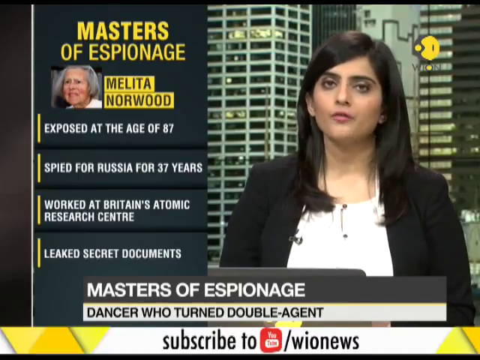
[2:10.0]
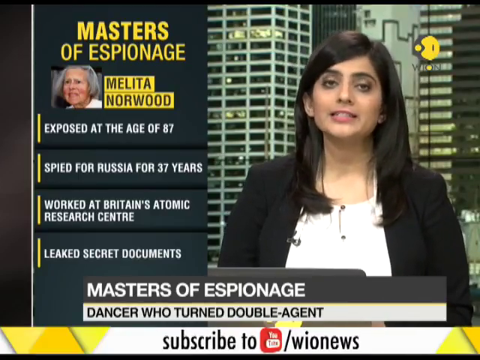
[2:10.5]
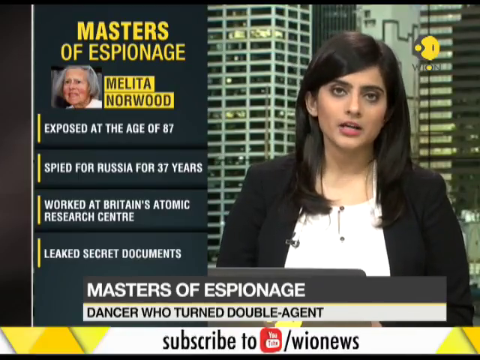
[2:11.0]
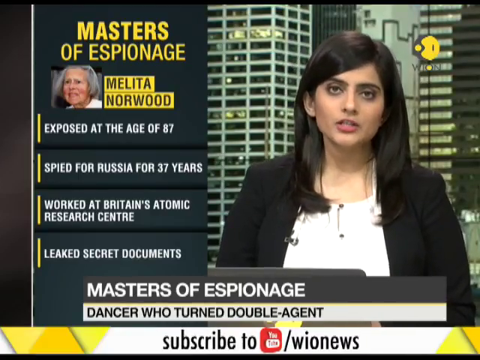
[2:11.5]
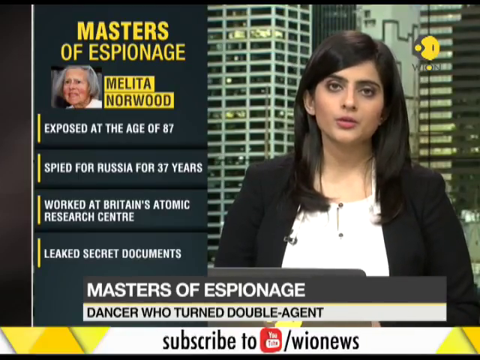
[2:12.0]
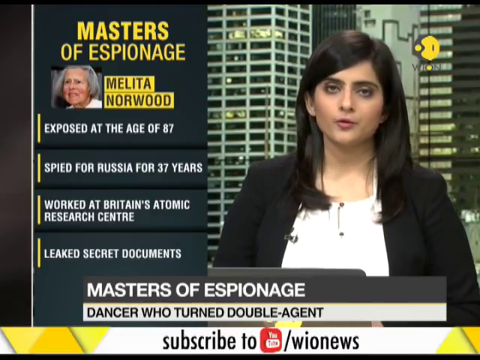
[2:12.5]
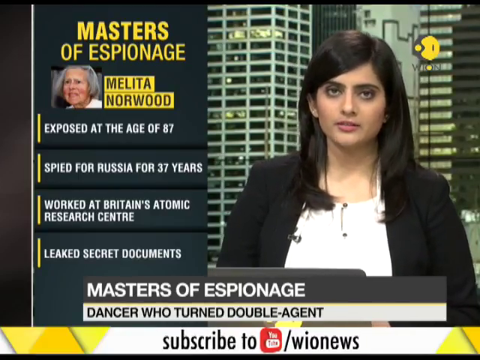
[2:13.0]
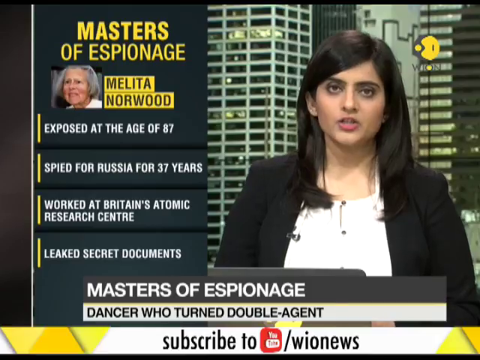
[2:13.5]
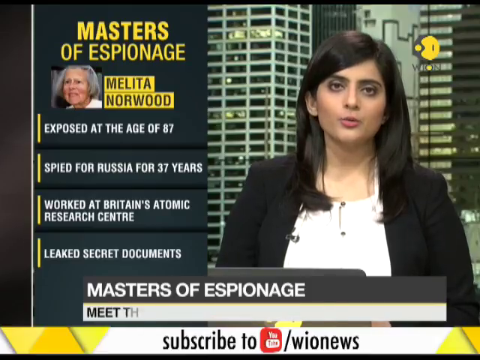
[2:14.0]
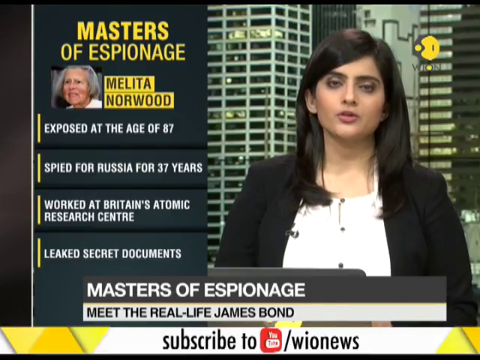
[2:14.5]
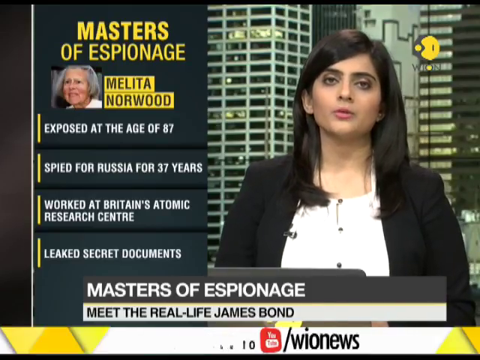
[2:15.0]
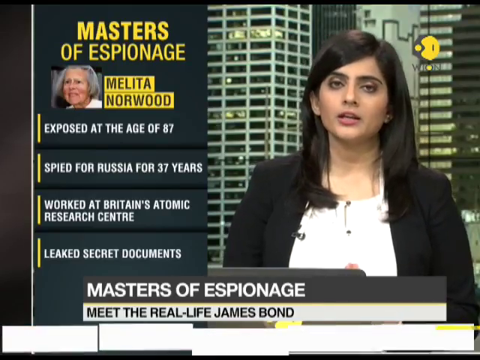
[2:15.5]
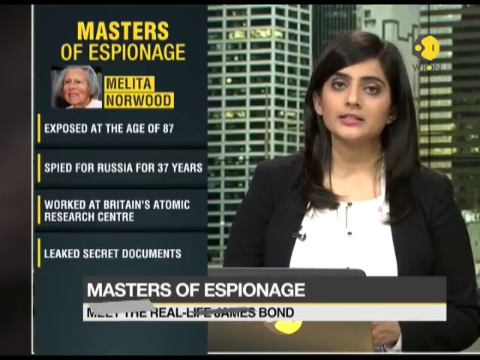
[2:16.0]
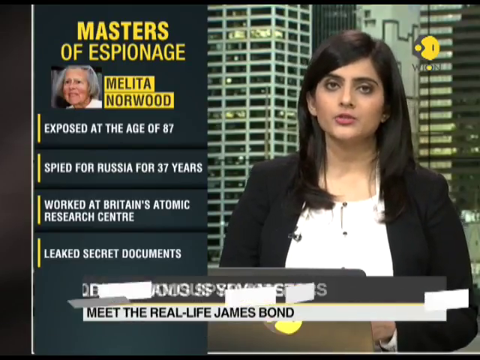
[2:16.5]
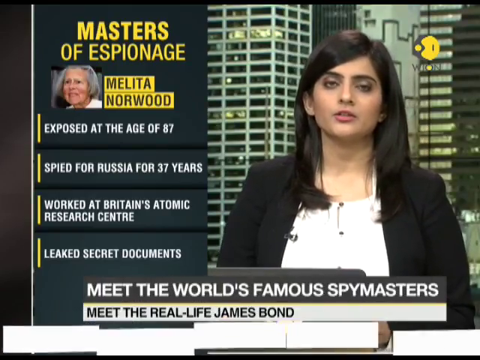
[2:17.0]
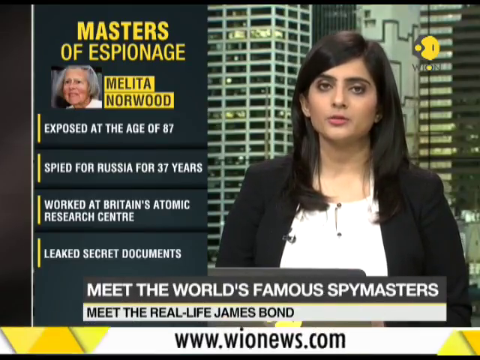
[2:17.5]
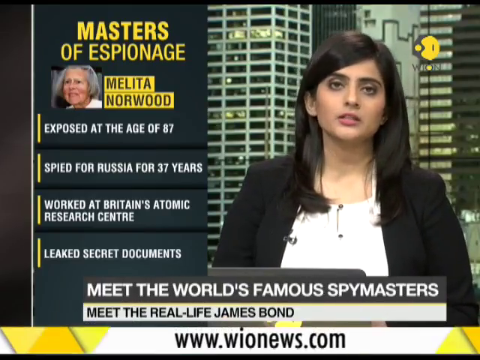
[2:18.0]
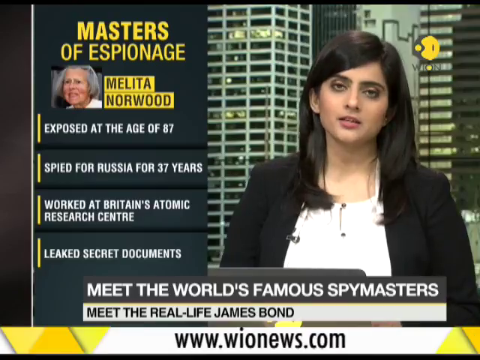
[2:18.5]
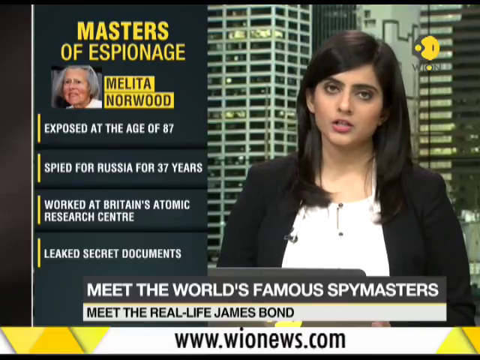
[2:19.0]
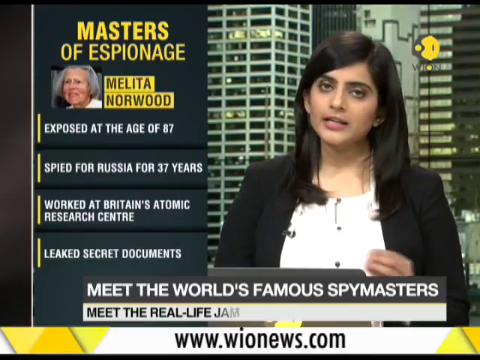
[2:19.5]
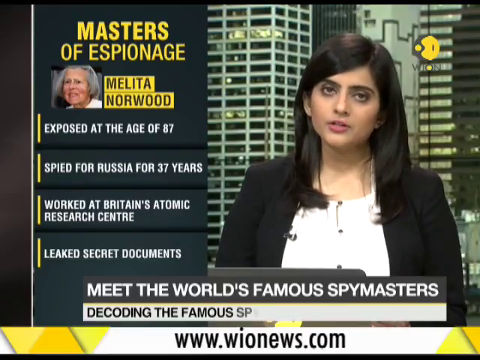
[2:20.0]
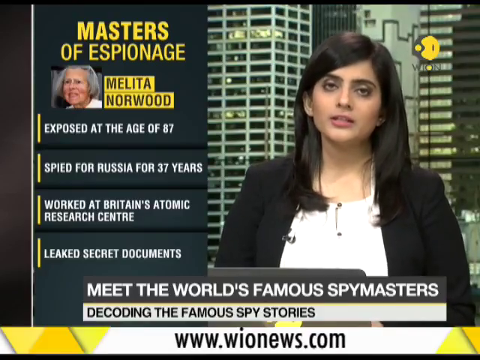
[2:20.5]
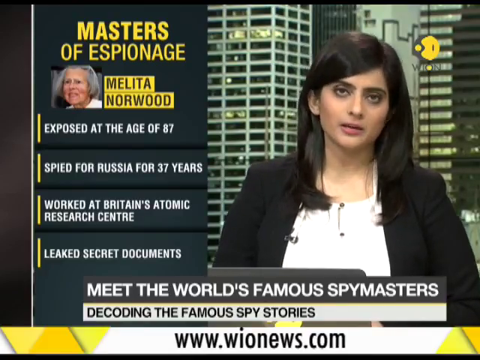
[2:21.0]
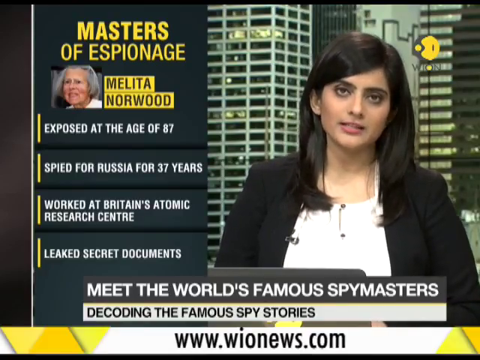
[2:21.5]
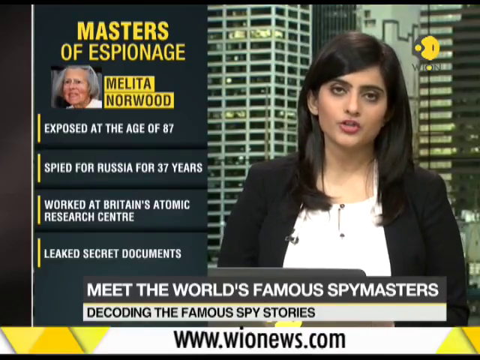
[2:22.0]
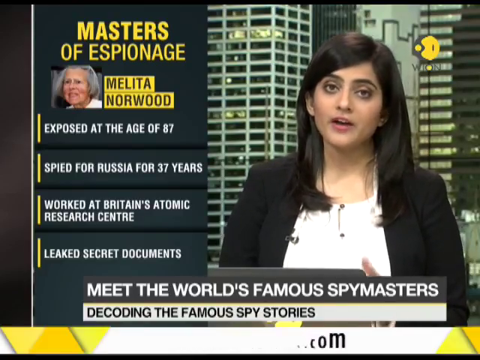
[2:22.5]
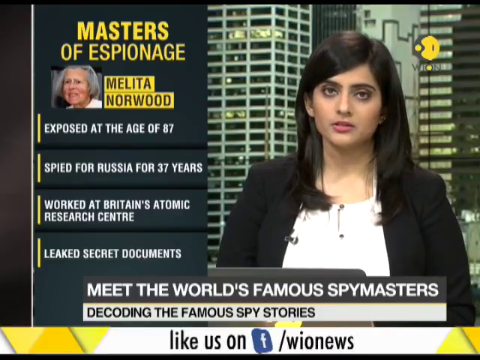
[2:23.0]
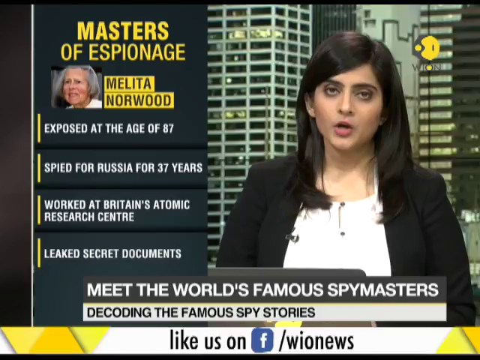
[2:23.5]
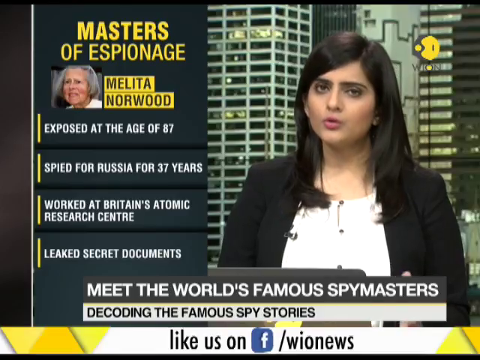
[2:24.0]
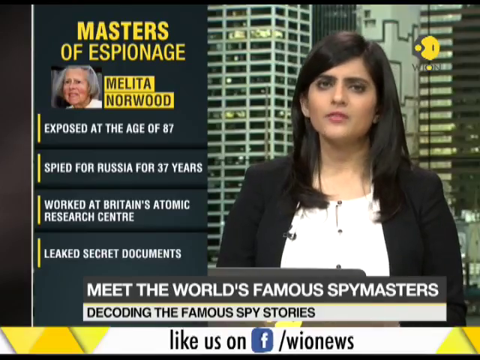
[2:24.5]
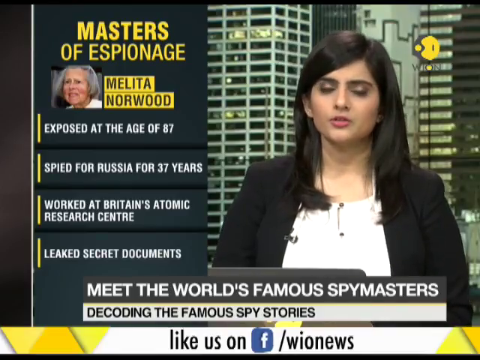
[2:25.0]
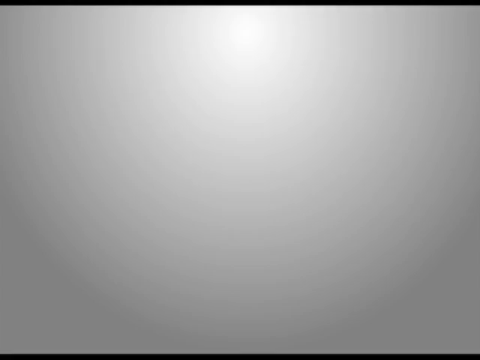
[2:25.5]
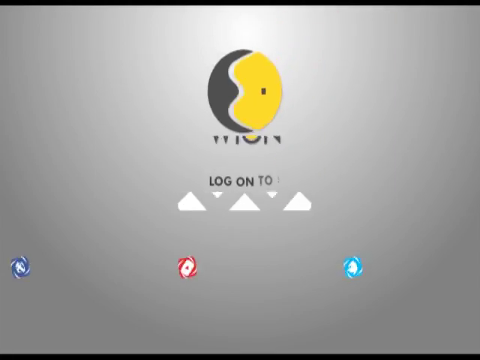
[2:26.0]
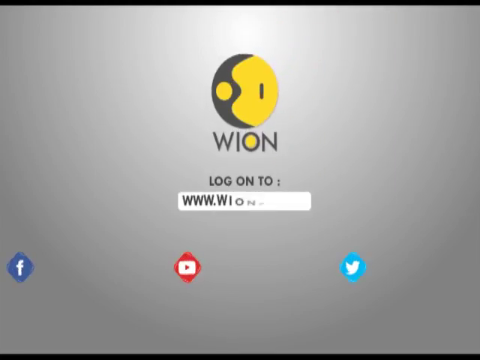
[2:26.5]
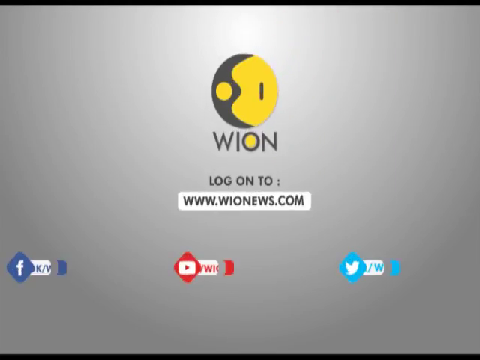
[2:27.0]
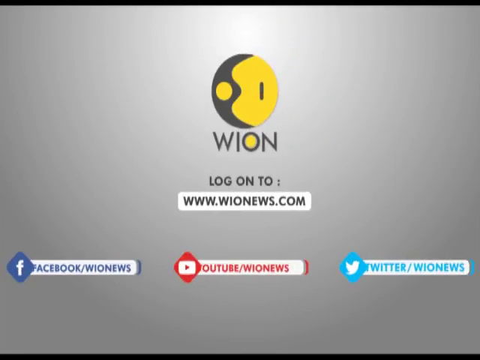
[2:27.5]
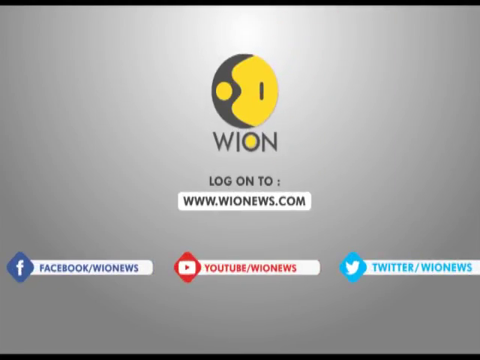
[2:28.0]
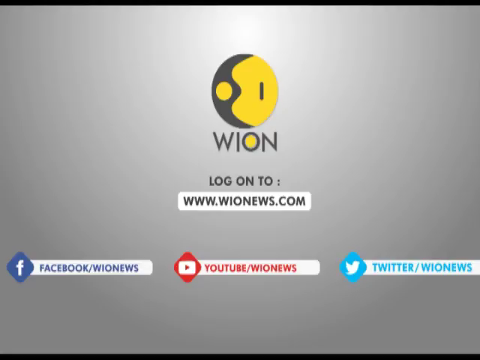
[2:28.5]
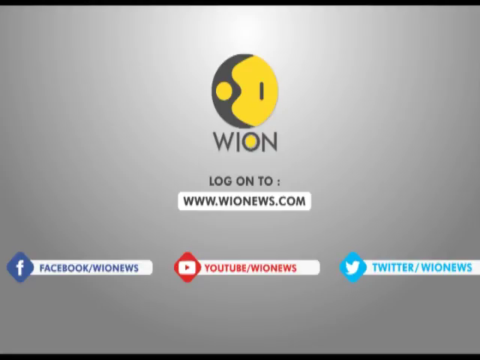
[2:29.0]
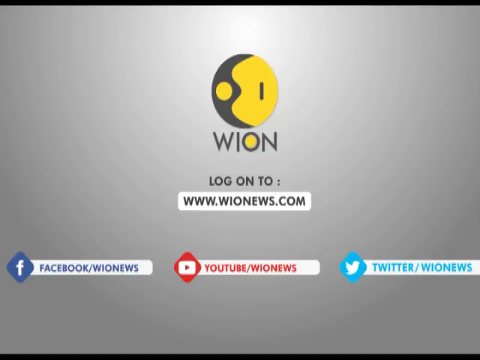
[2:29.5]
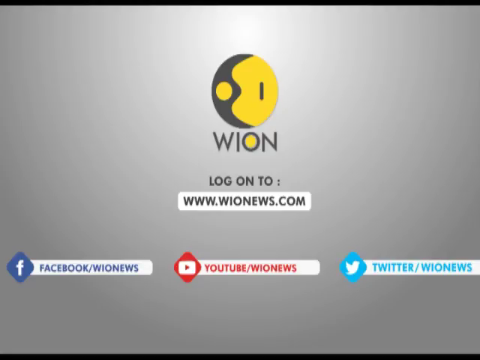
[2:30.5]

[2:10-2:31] A woman with long dark hair wears a black jacket and white top with a small microphone clipped to her jacket, with a picture of a large city behind her. The bottom labels read "Masters of espionage" and, below, "Dancer who turned double agent." An added section reads "Masters of espionage" at the top and shows a square picture of an older-looking woman labeled "Melita Norwood," with facts listed below. The bottom labels then change to "Meet the world's famous spy masters" and "Meet the real life James Bond."